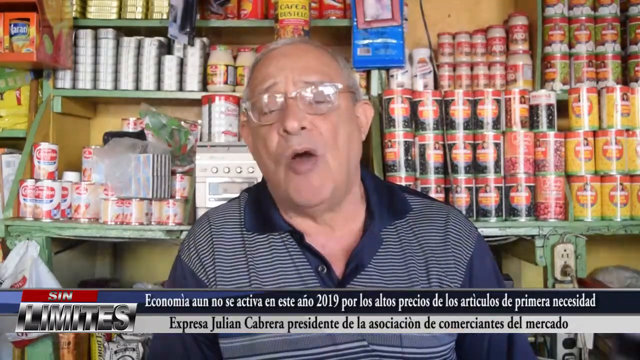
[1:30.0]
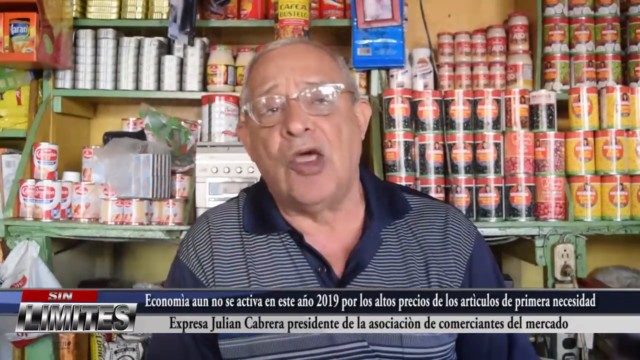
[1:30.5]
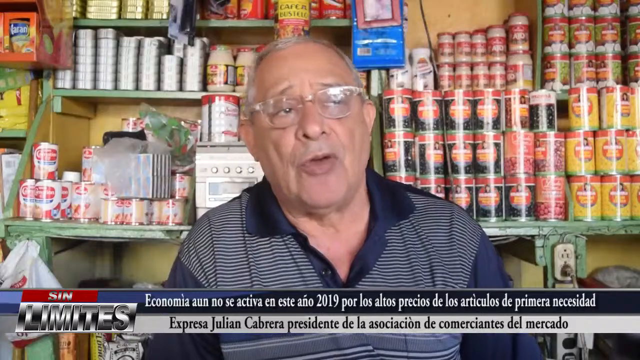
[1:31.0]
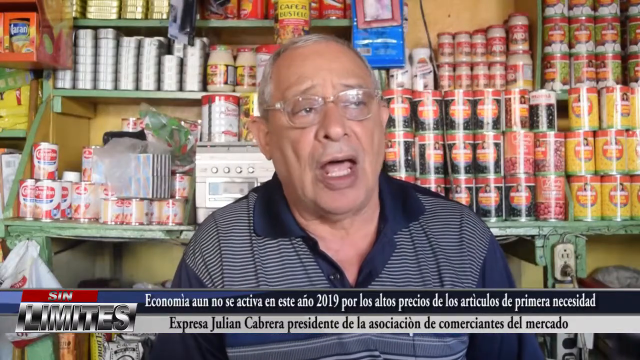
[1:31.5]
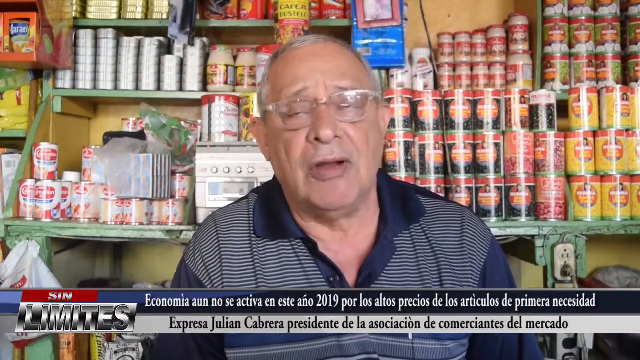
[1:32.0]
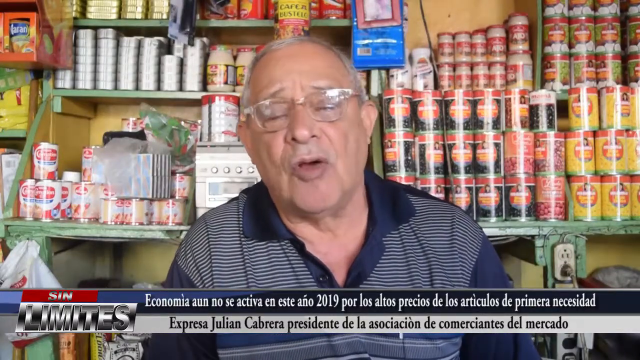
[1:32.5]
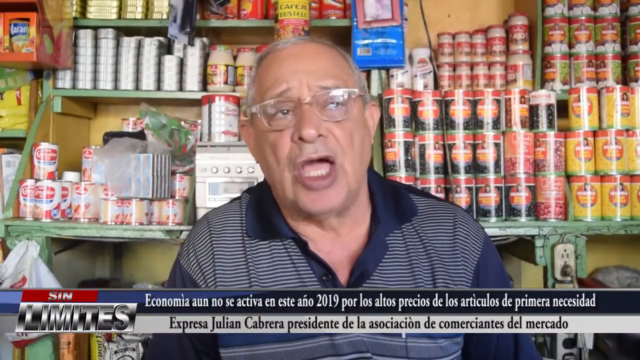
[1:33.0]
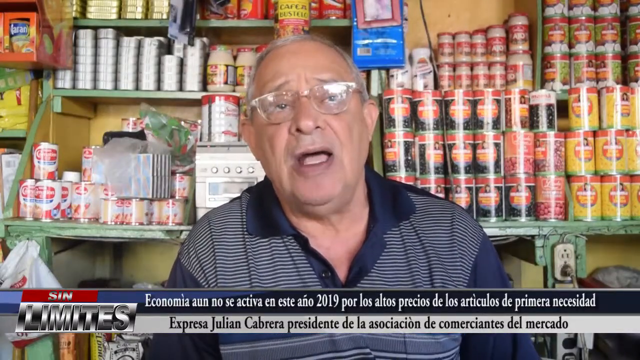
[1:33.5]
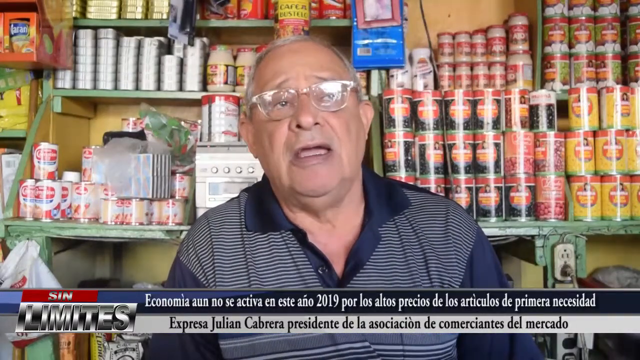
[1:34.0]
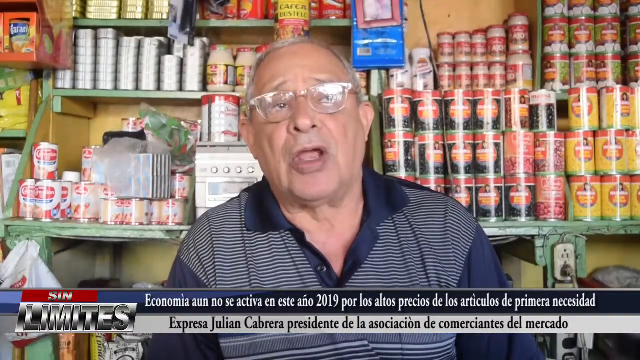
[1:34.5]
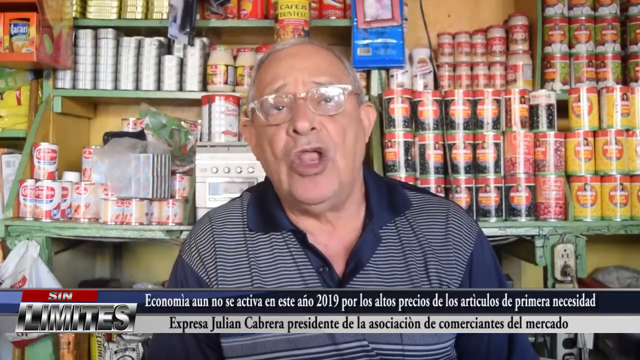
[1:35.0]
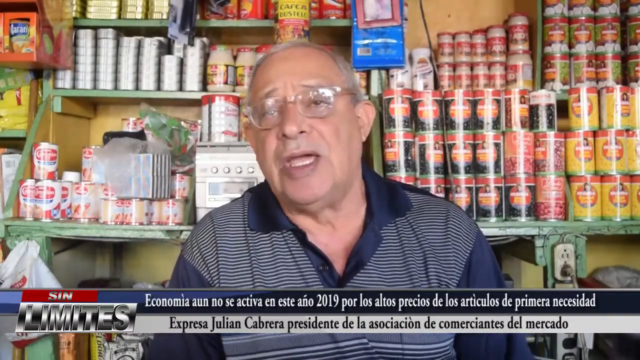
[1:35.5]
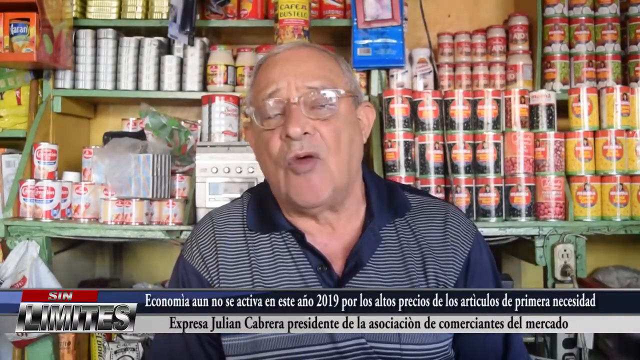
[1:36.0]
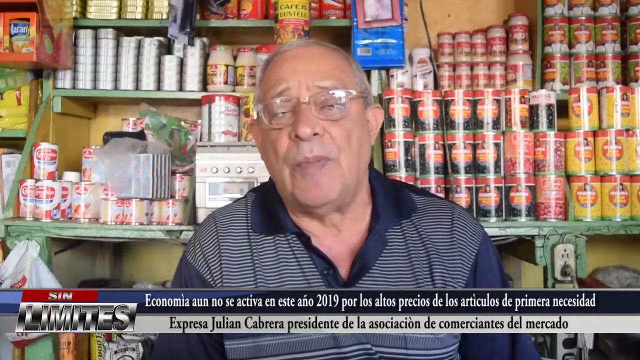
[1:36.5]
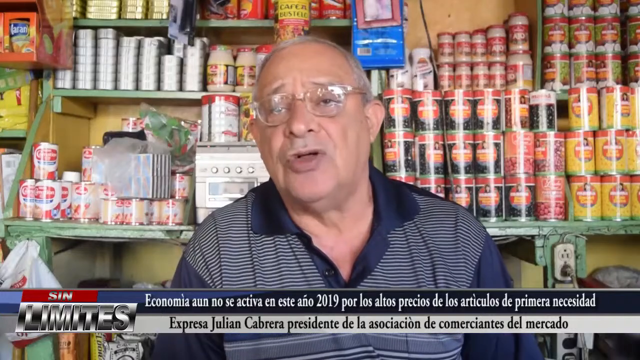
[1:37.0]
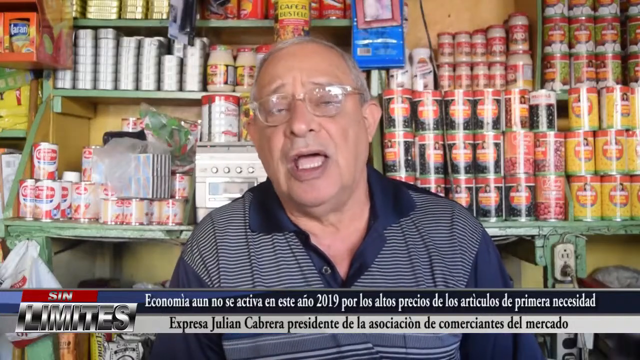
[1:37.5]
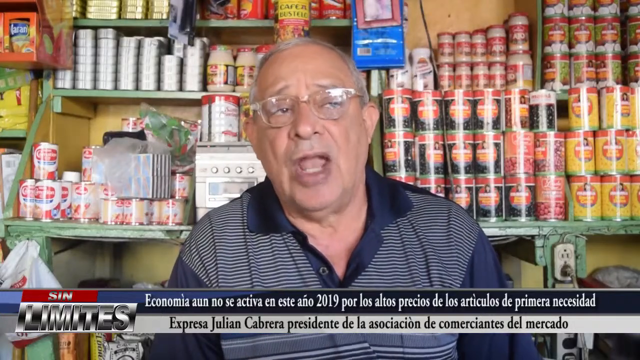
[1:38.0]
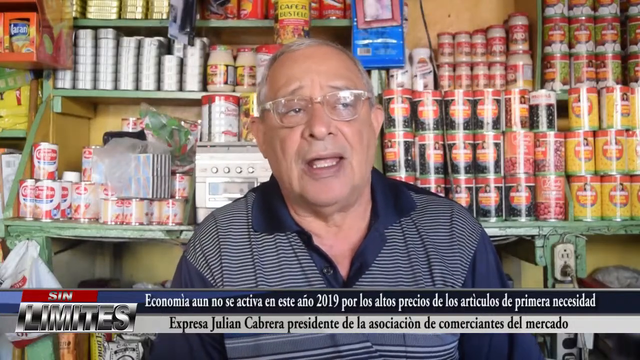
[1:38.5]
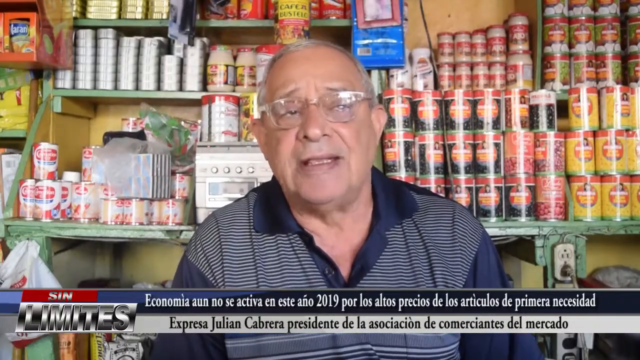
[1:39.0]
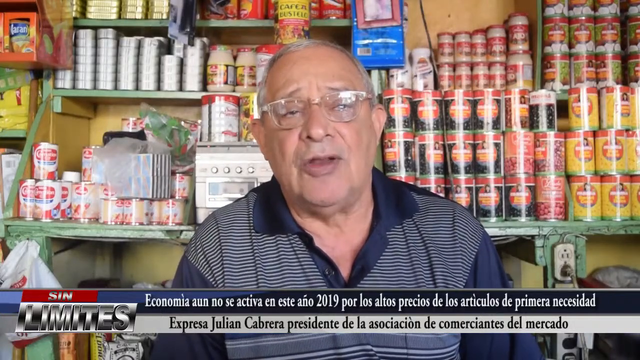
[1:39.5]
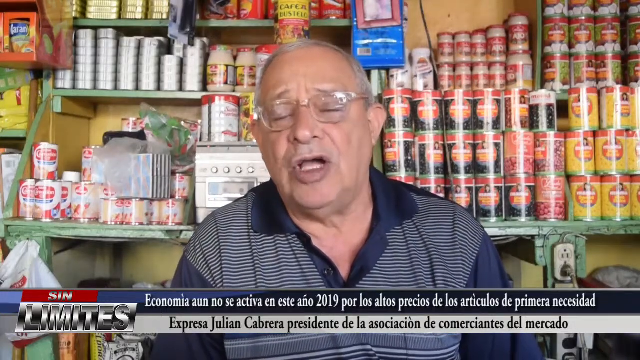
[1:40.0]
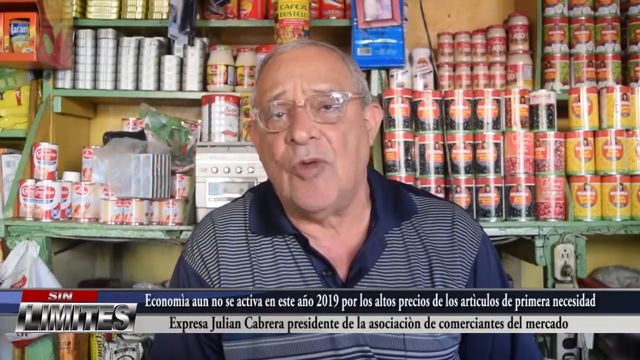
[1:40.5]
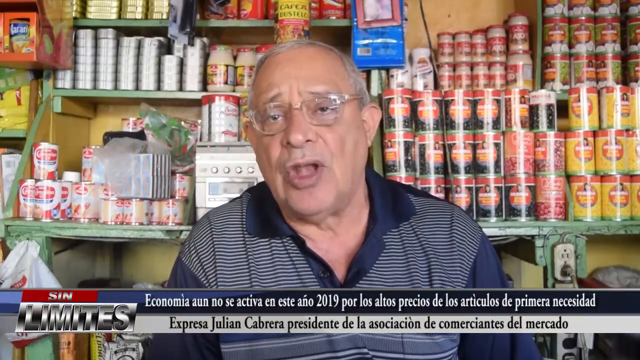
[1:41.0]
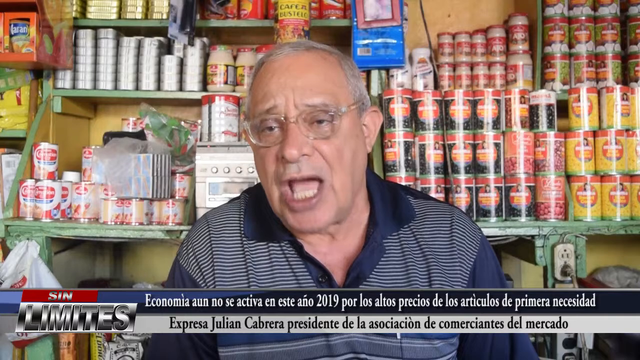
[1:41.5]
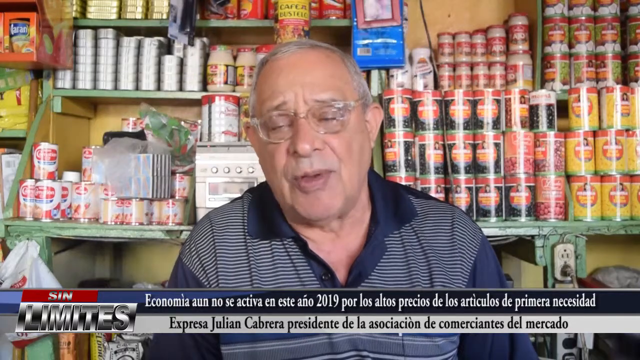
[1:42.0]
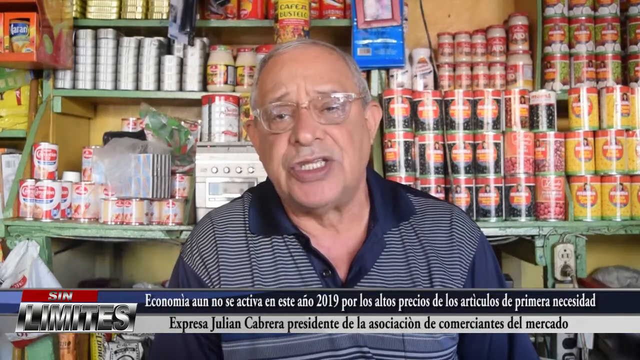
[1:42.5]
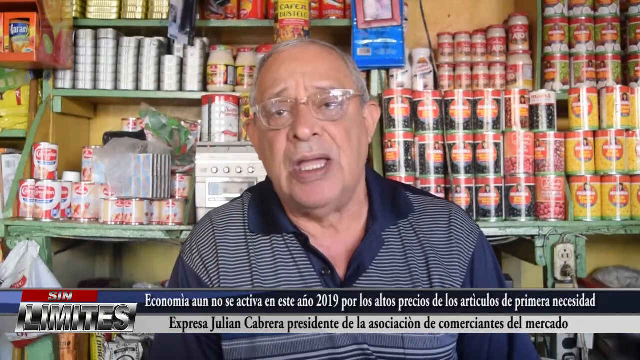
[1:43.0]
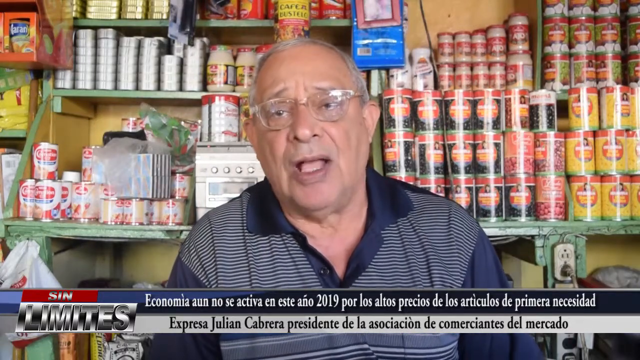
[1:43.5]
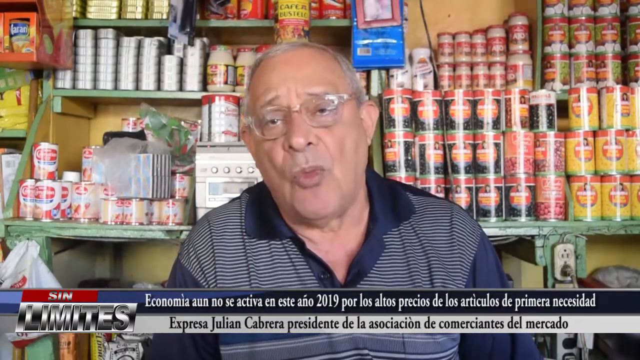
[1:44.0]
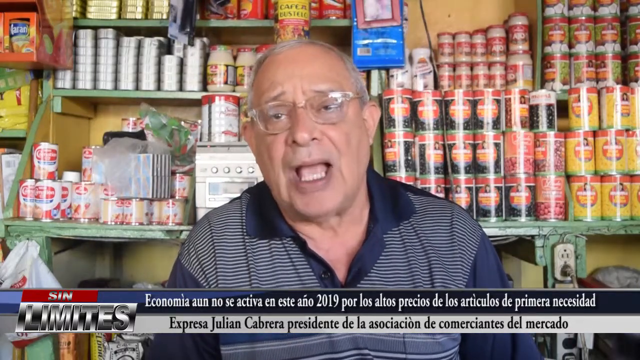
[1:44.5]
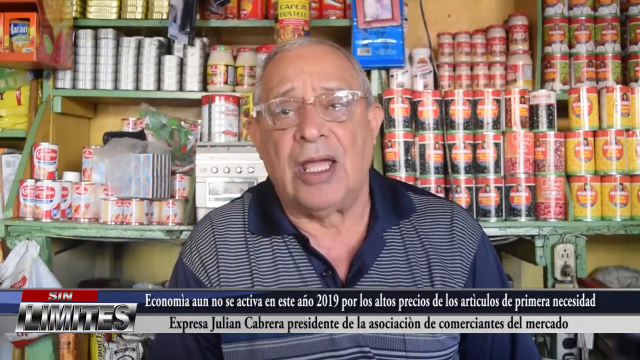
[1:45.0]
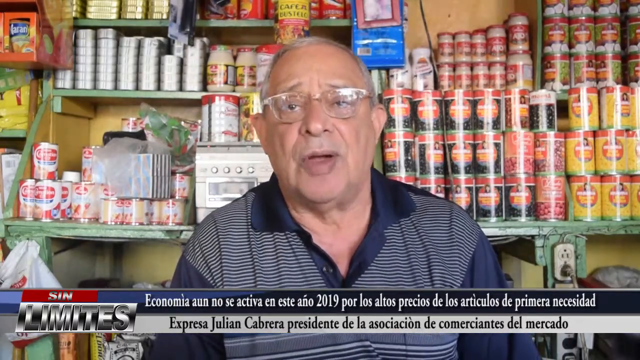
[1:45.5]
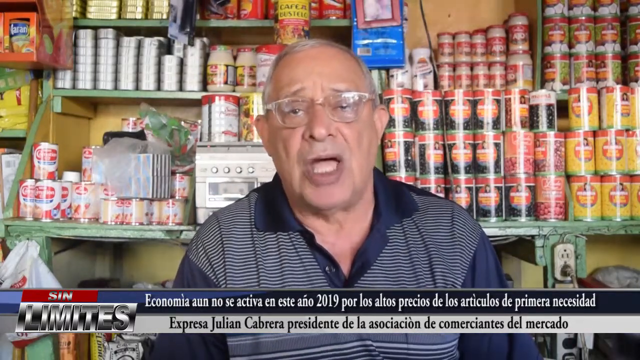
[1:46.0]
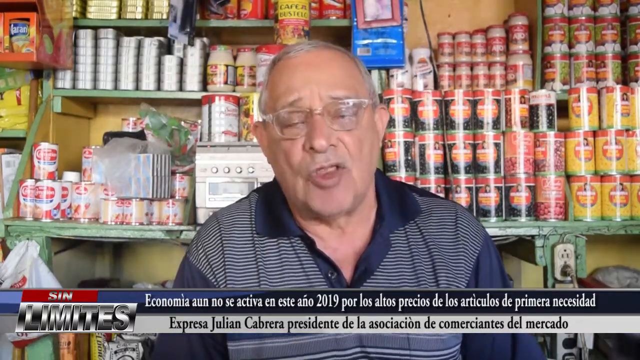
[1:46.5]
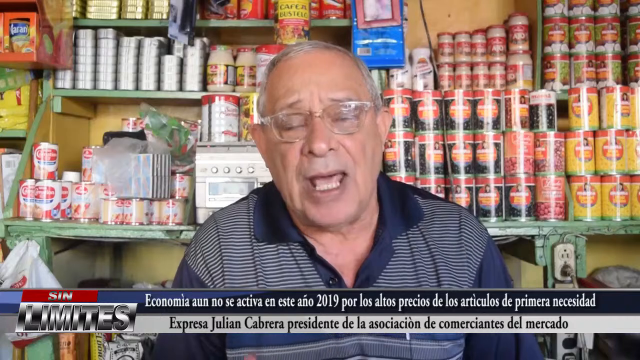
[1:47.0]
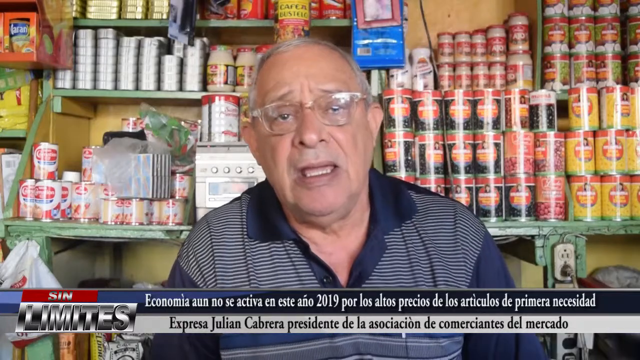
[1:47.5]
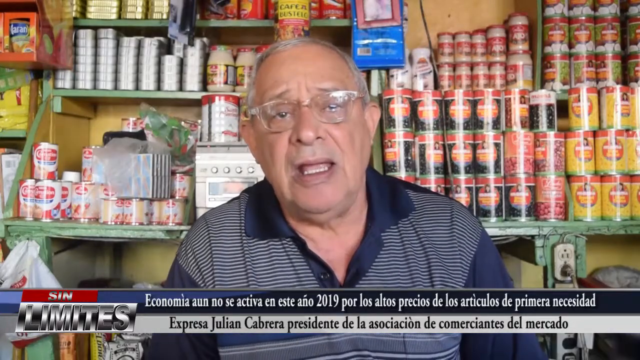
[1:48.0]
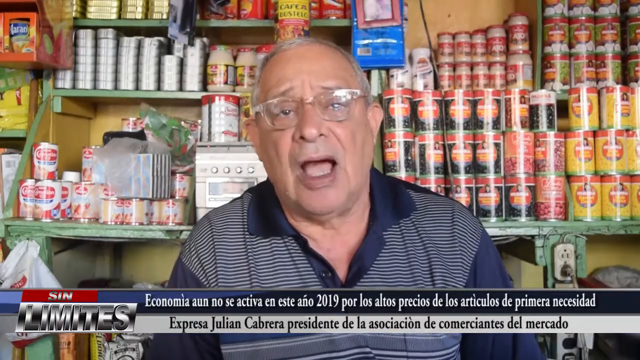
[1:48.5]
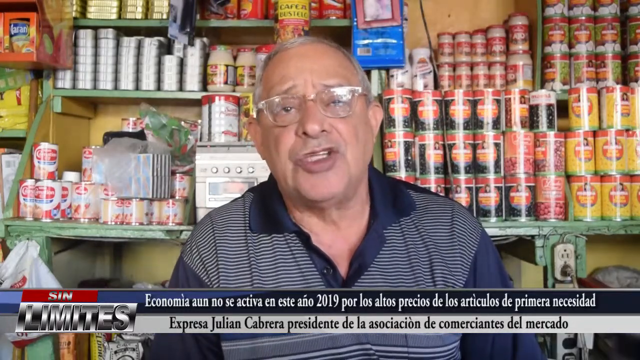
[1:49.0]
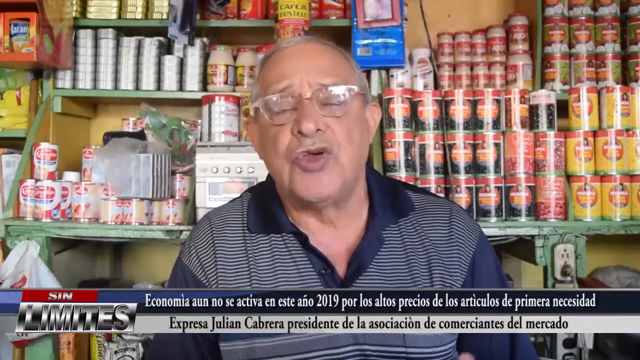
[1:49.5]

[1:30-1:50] A man who might be the store manager or owner sits and is interviewed, with a caption relating to economics and the year 2019. The caption includes the word "necesidad", and below it reads "express Julian Cabrera, Presidente de la Asociación de Comerciantes del Mercado". Canned goods are behind his head, apparently including cans of beans and corn, with what look almost like cans of sardines at his upper left. Some of the cans are gray, some are gold, and various cans are red and white.